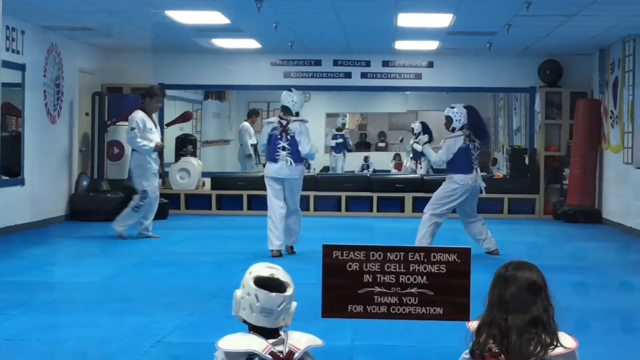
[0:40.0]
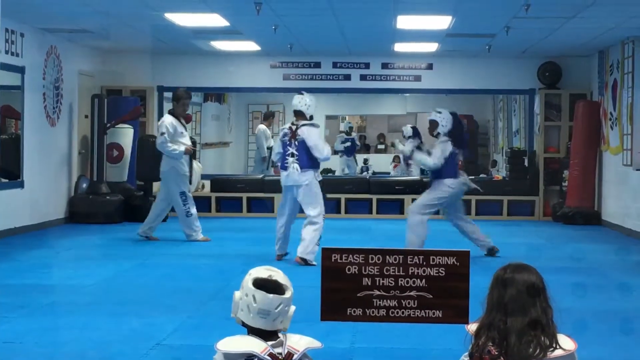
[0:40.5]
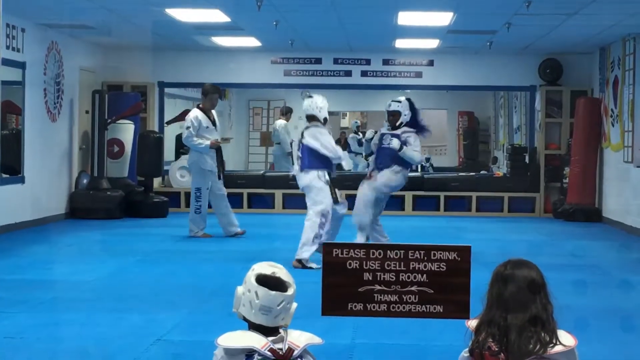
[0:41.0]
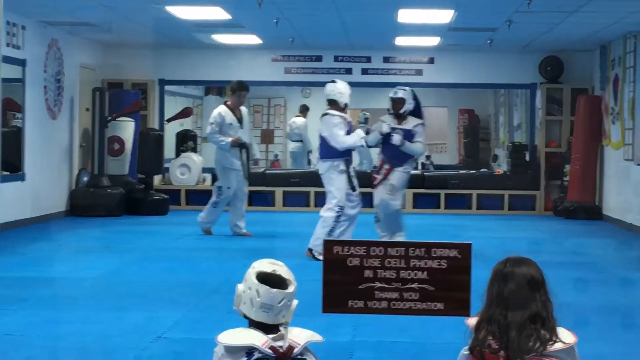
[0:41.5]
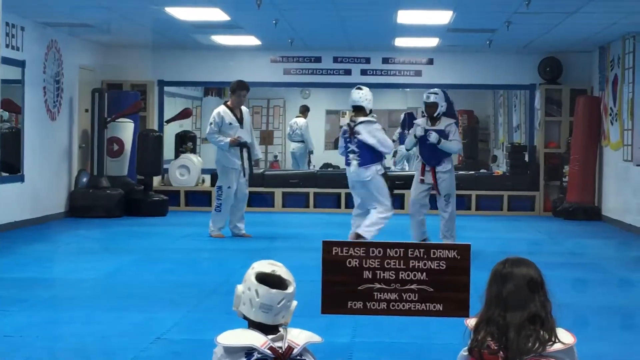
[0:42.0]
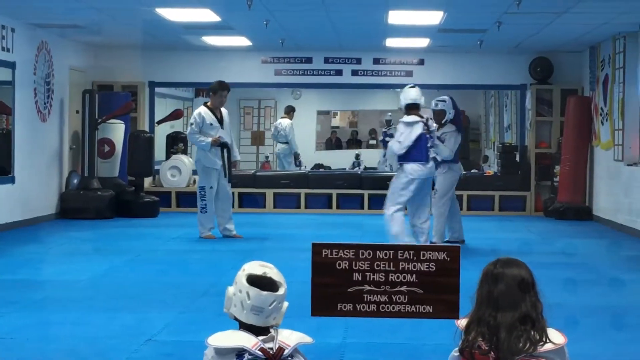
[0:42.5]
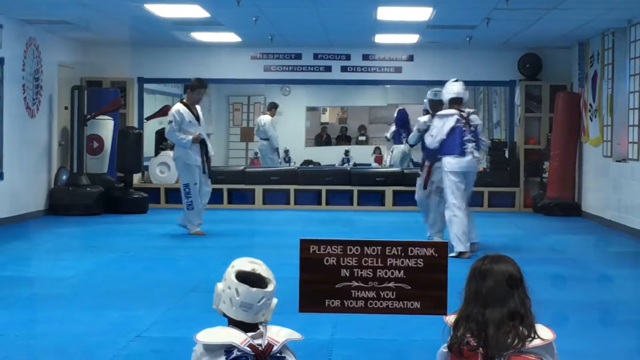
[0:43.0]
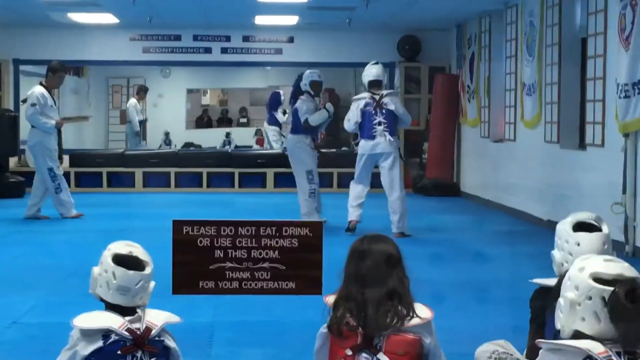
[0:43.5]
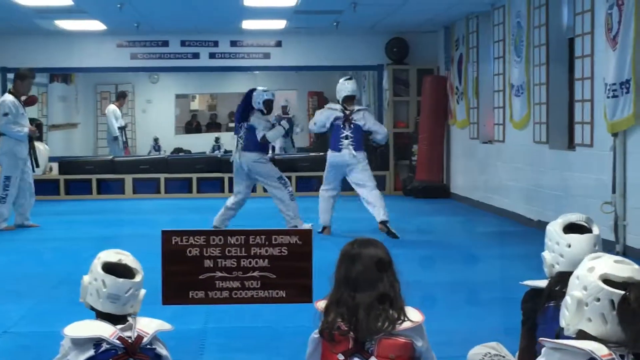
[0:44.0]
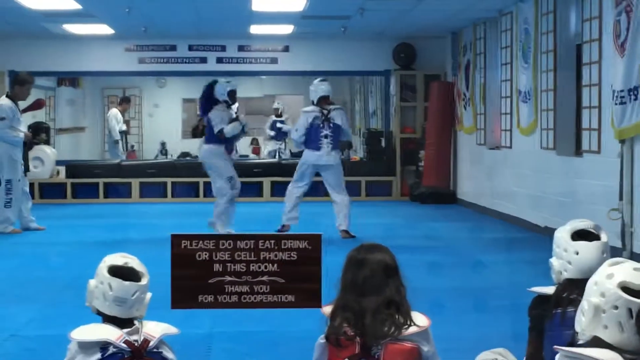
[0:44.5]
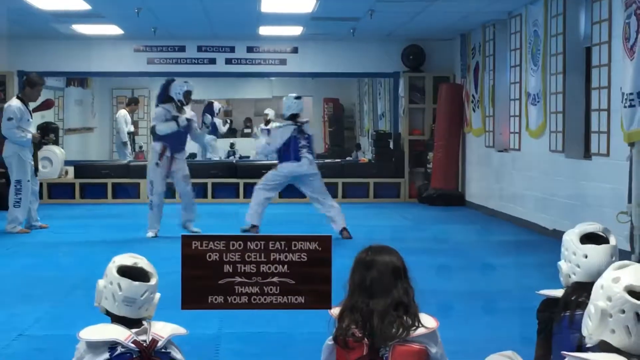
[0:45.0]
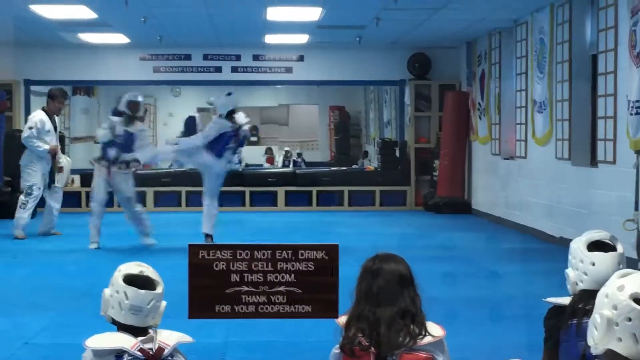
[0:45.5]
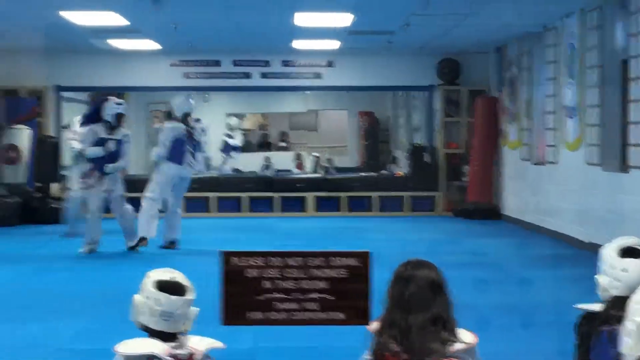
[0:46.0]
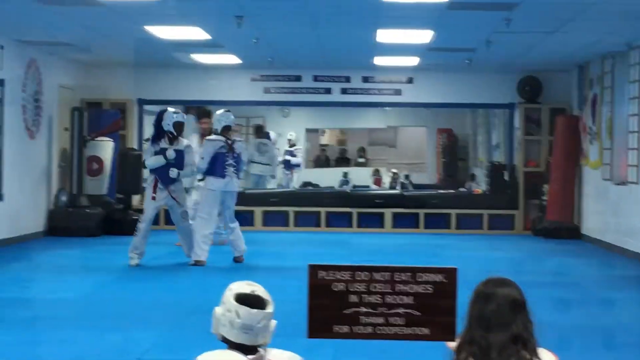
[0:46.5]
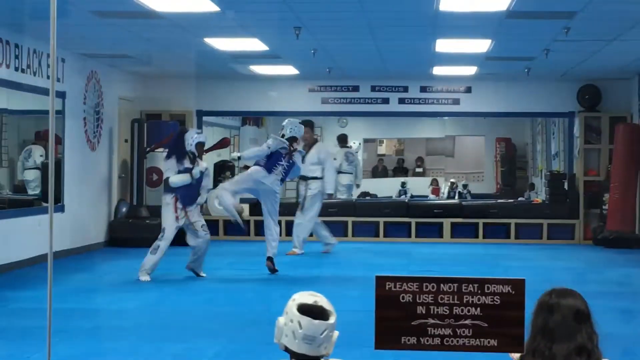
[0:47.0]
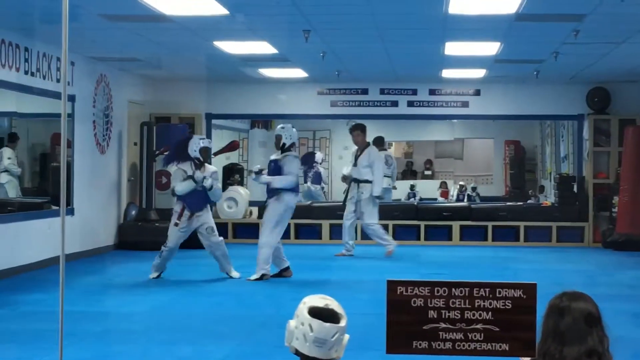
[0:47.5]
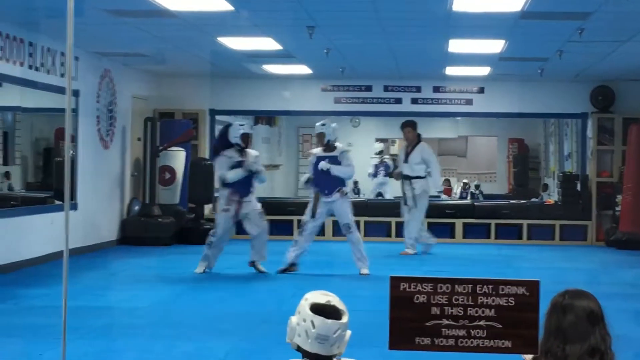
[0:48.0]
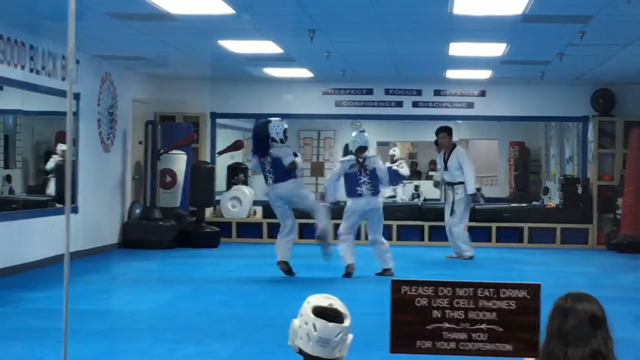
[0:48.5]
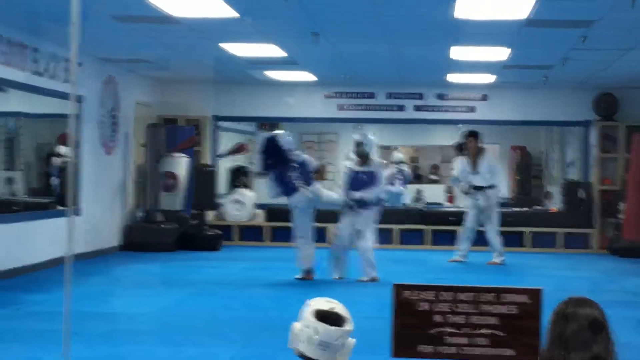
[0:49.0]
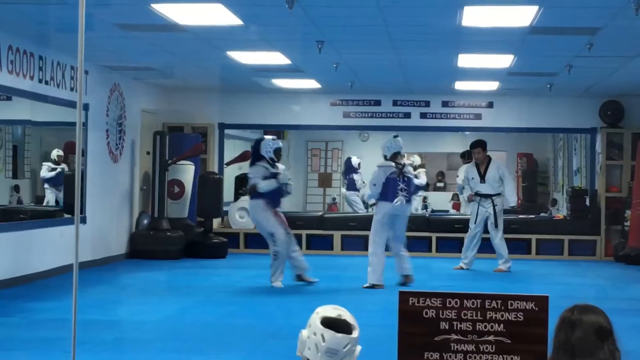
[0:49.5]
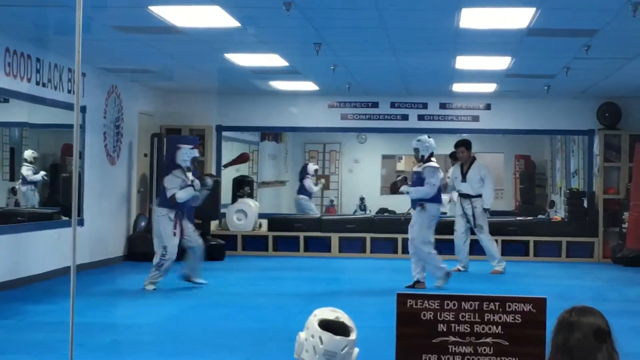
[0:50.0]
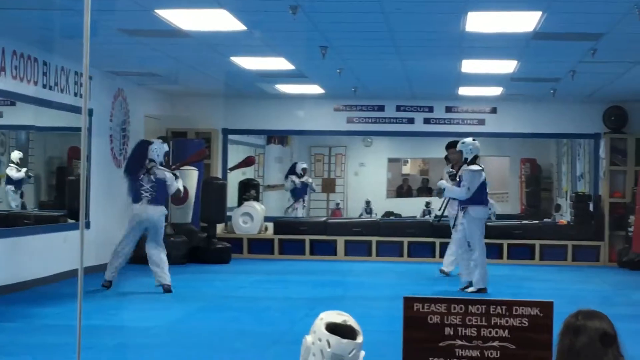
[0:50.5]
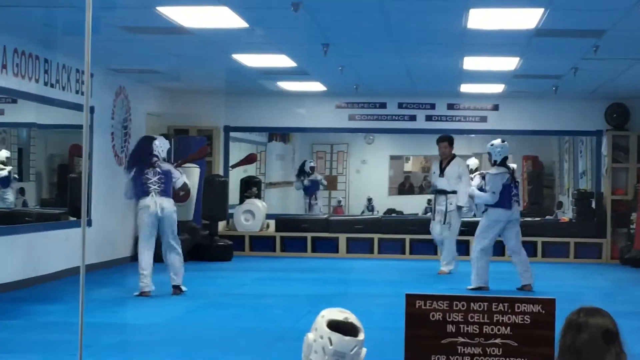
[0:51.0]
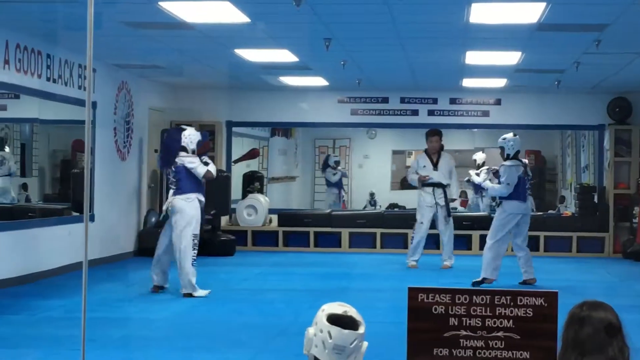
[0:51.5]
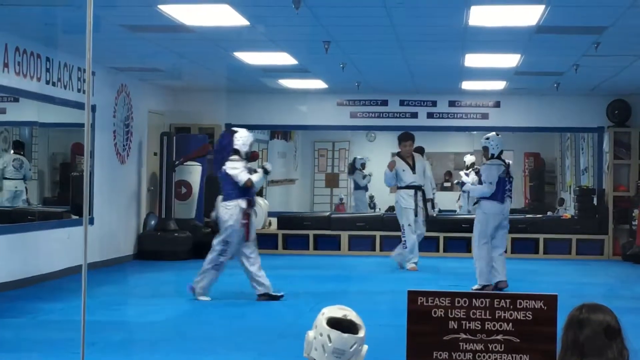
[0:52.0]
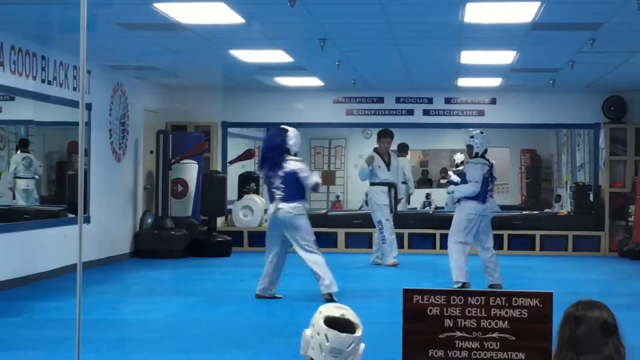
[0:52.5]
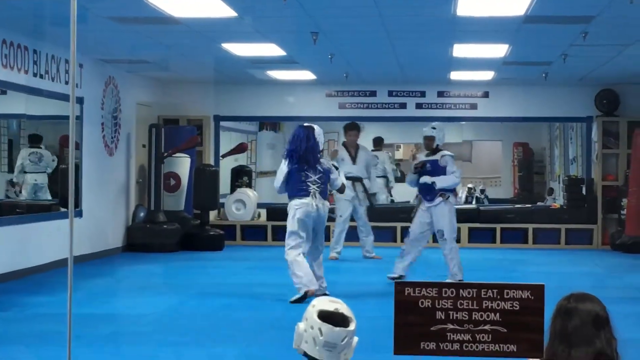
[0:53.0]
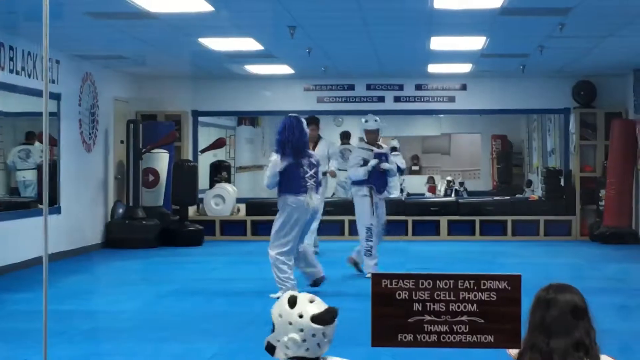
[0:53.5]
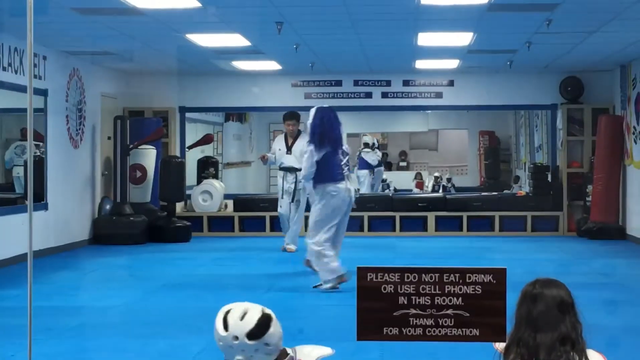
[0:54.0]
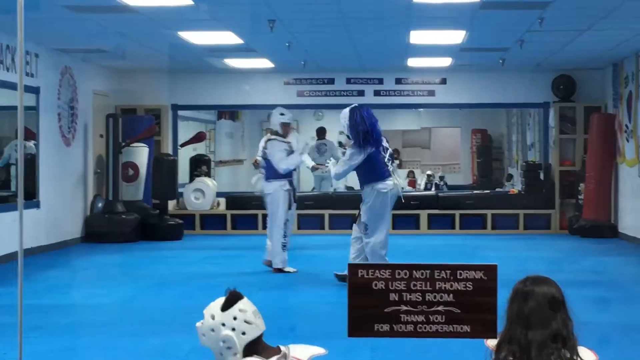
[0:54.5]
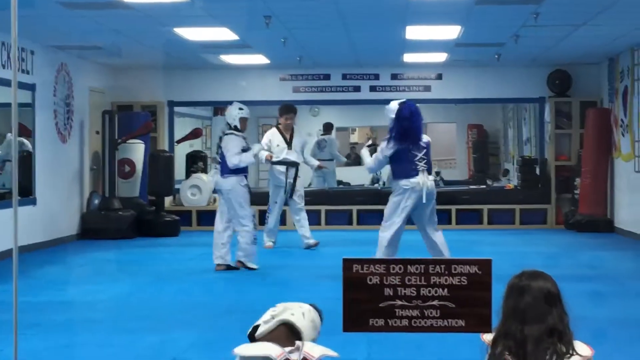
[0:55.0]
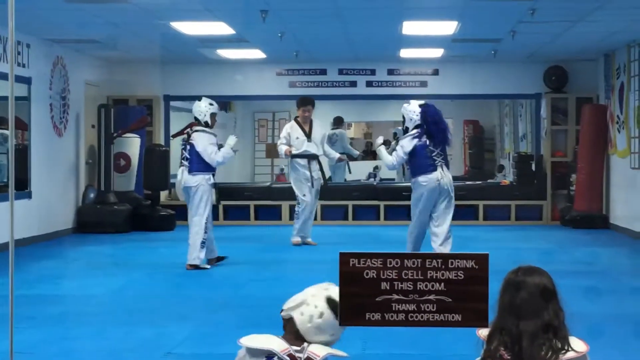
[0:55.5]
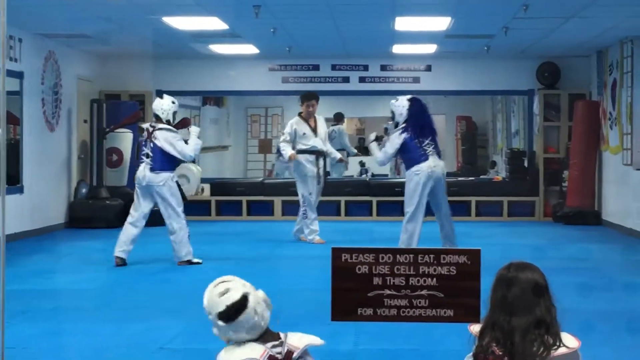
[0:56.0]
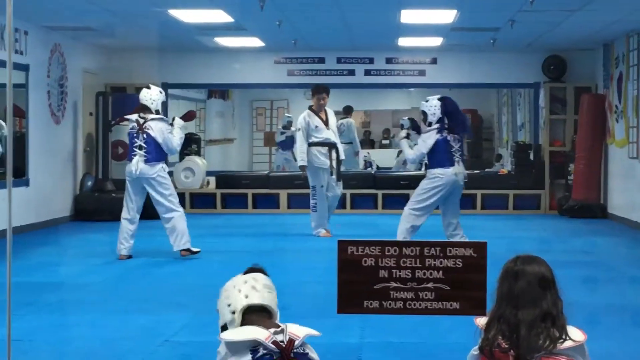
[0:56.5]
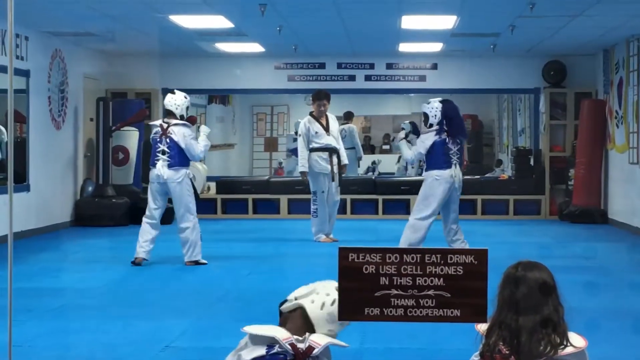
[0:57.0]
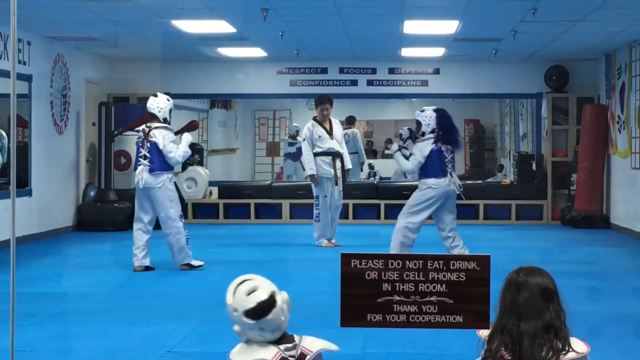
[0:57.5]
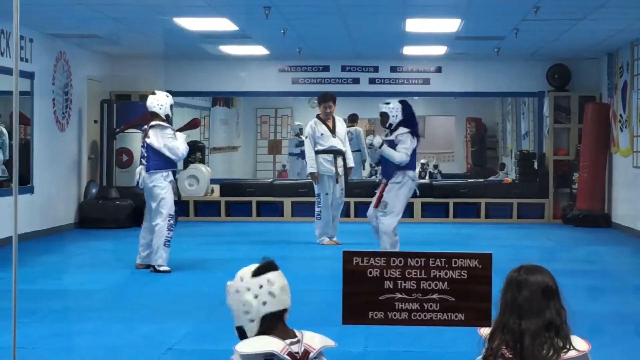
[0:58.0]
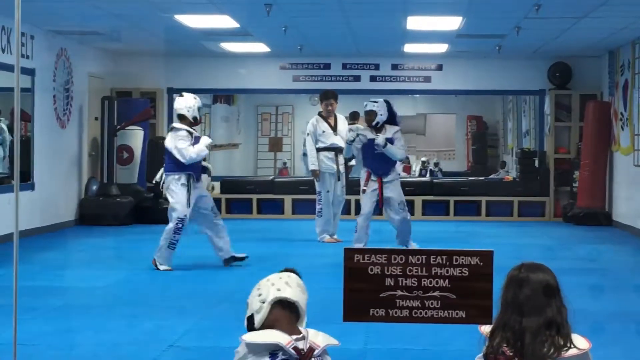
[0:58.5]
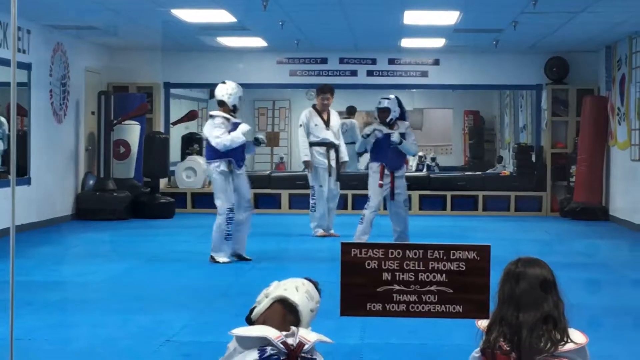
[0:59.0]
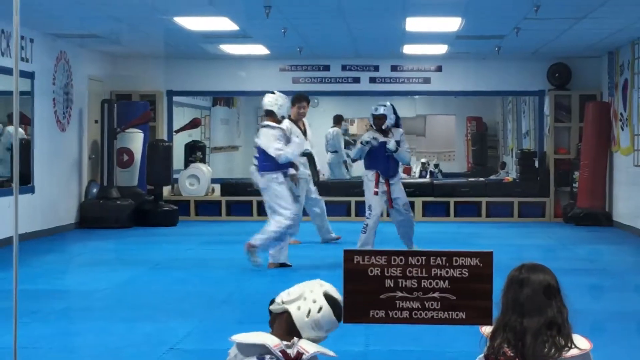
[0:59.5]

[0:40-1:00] The scene is the same area. The instructor is on the left, watching the fight. The two fighters are still near each other: the one on the right holds her arms up, and the one on the left stands up straight. The flooring is bright blue. Children and other fighters are sitting down, watching the two fighters. At the bottom middle, text reads "please do not eat, drink, or use cell phones in the room. Thank you for your cooperation." Four white square lights are visible on the roof, and in the background is a large, very reflective mirror with a bluish border. The fighters look toward each other, lifting their legs and knees as they try to strike. The right fighter hits repeatedly and the left fighter strikes back twice as they walk around facing each other. The instructor watches throughout. There is also a large mirror on the far left, and above it are the words "good black belt."